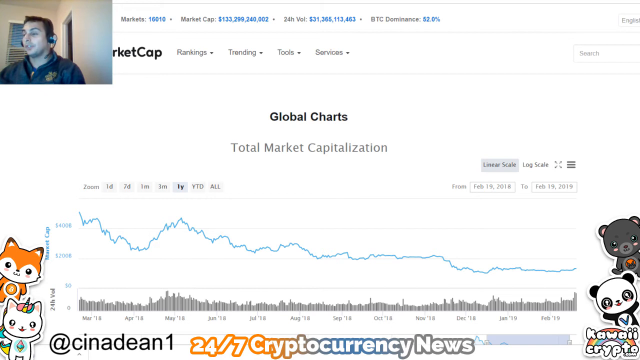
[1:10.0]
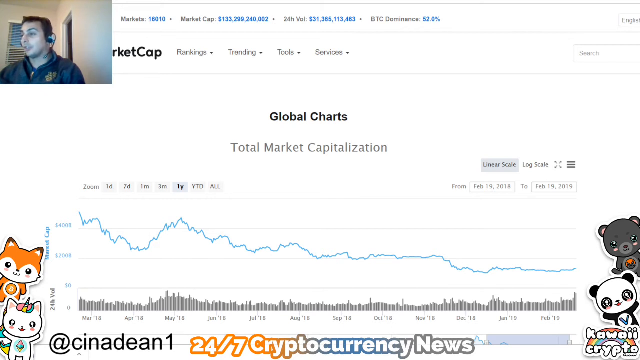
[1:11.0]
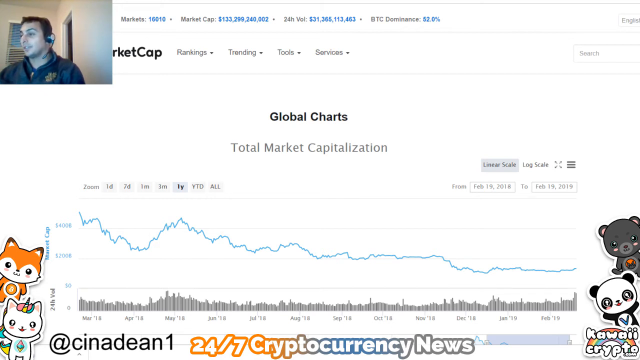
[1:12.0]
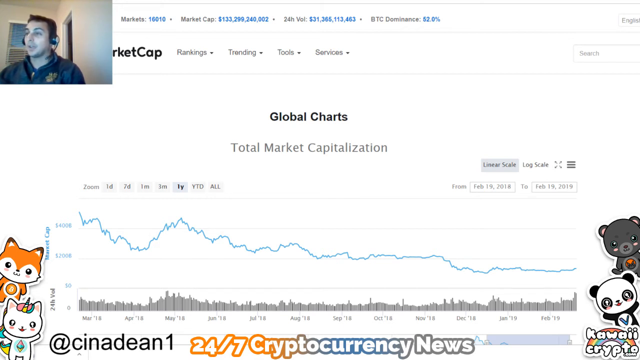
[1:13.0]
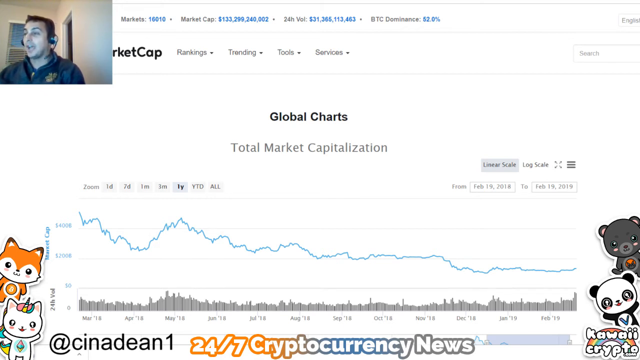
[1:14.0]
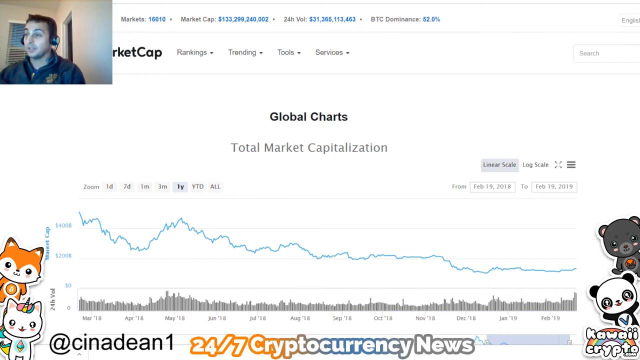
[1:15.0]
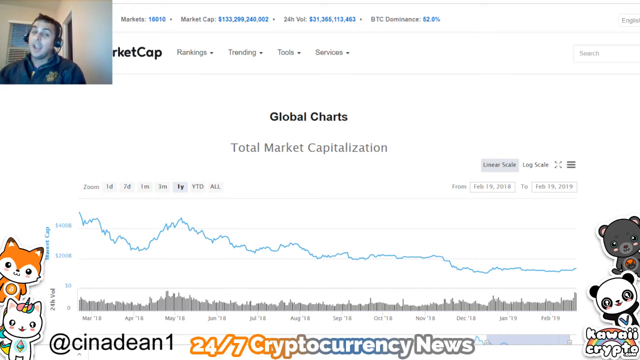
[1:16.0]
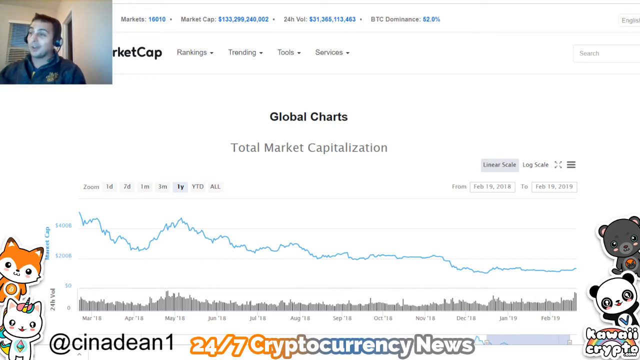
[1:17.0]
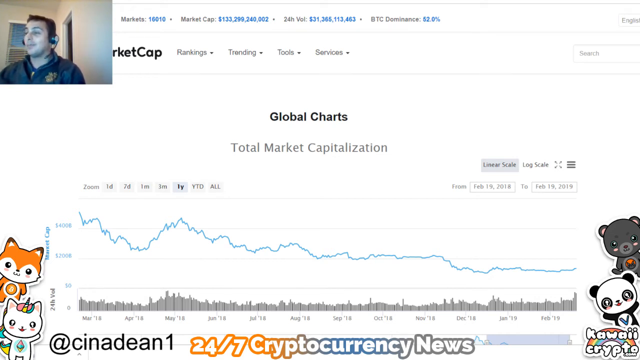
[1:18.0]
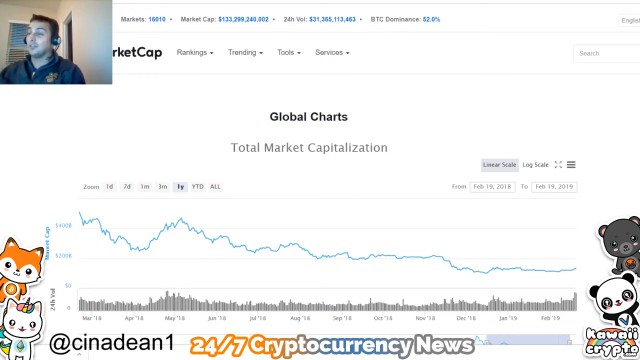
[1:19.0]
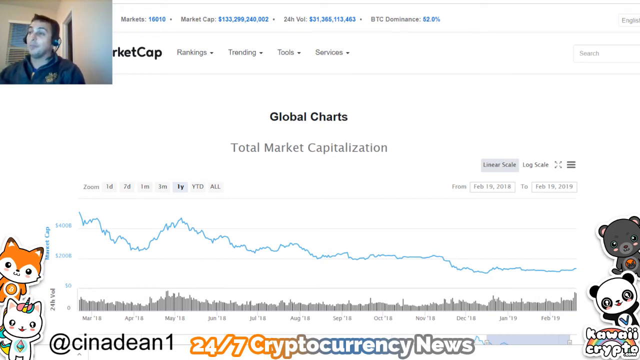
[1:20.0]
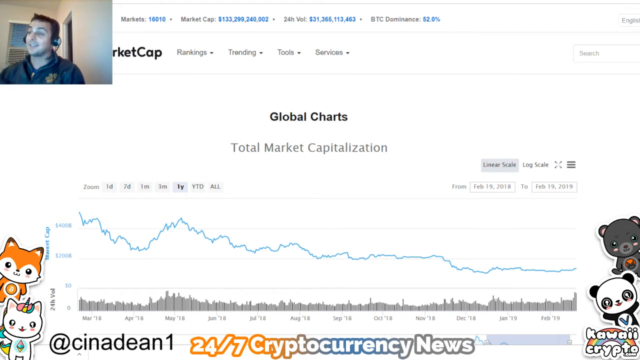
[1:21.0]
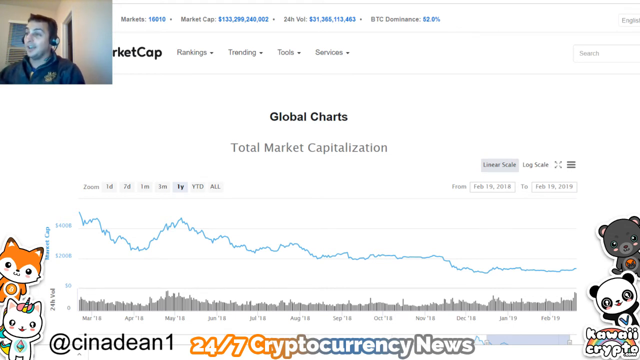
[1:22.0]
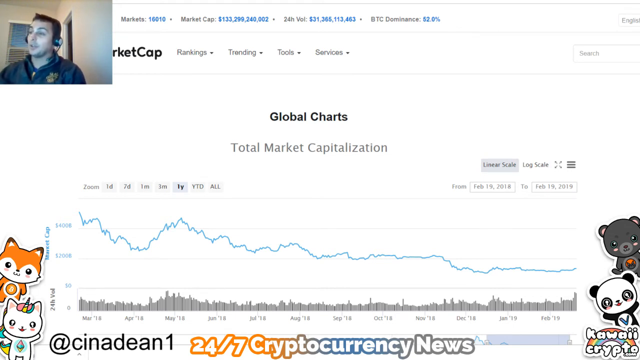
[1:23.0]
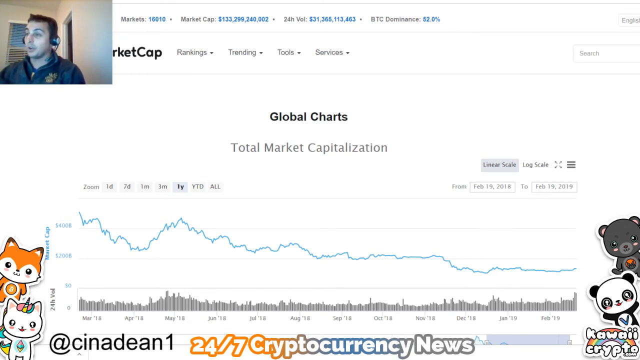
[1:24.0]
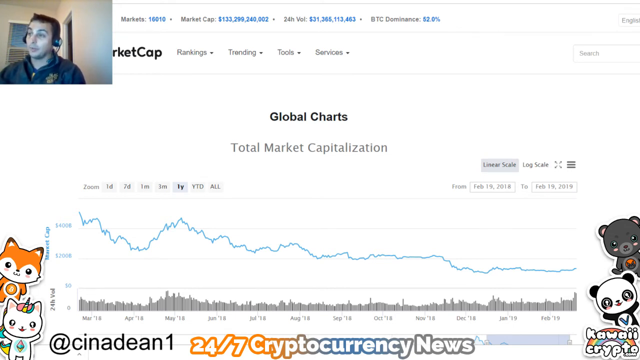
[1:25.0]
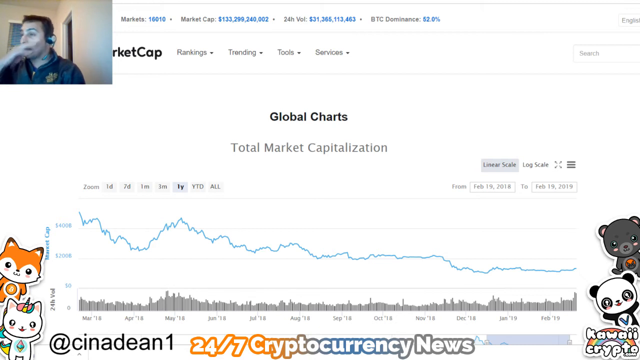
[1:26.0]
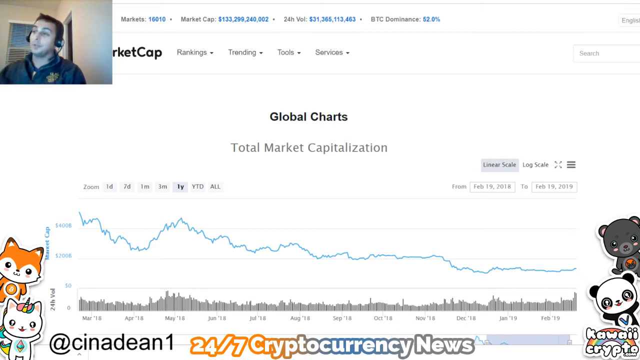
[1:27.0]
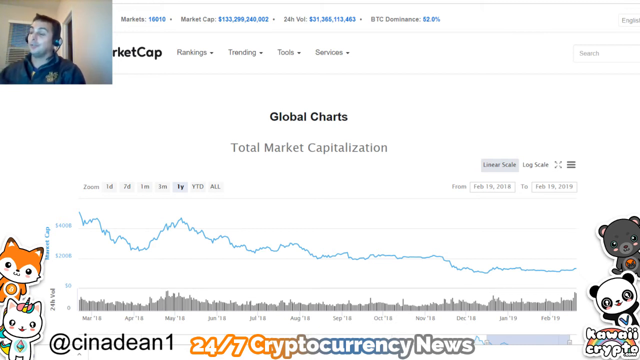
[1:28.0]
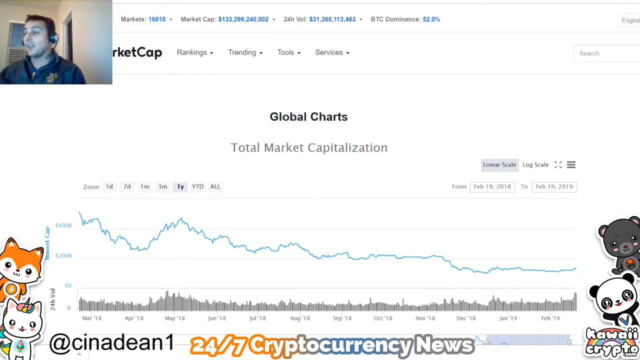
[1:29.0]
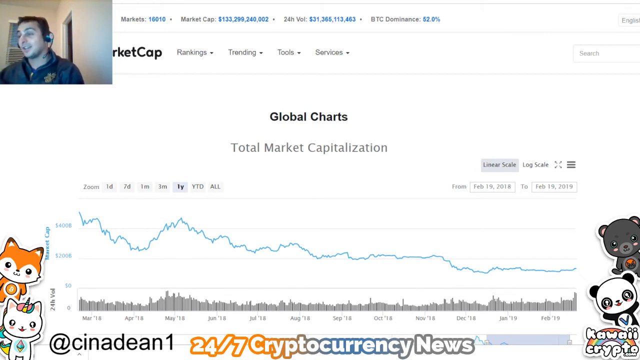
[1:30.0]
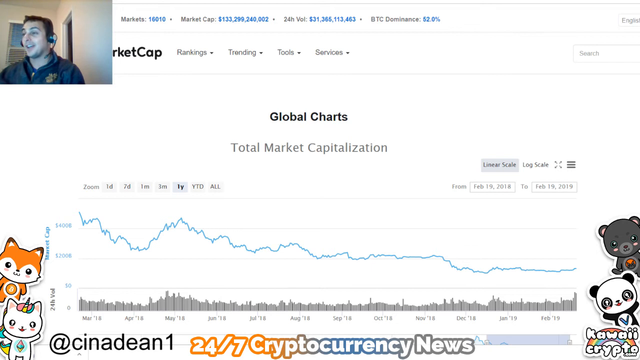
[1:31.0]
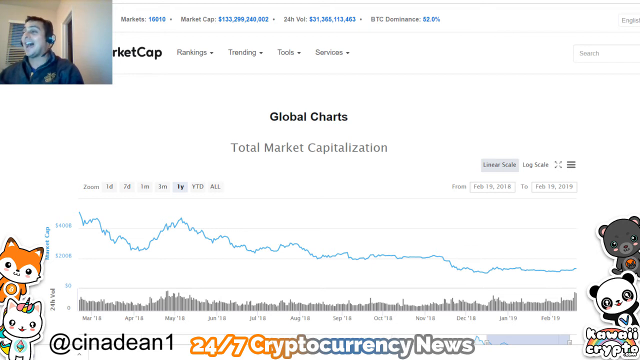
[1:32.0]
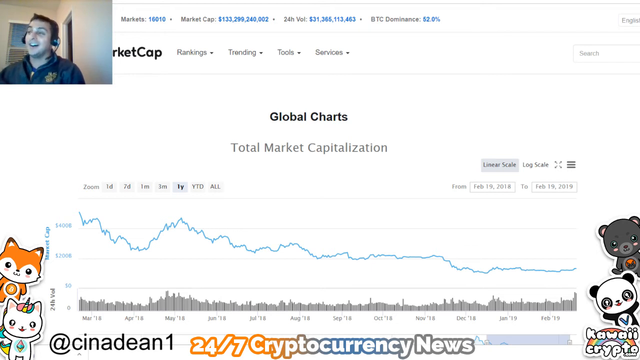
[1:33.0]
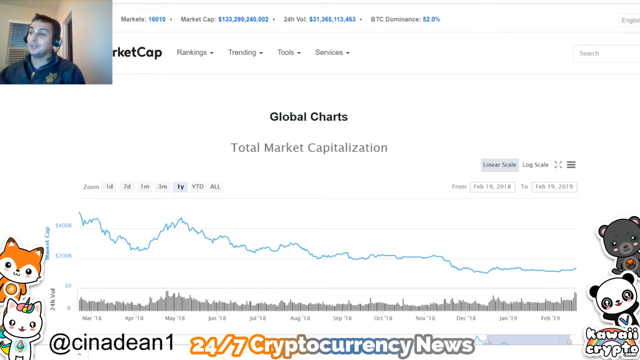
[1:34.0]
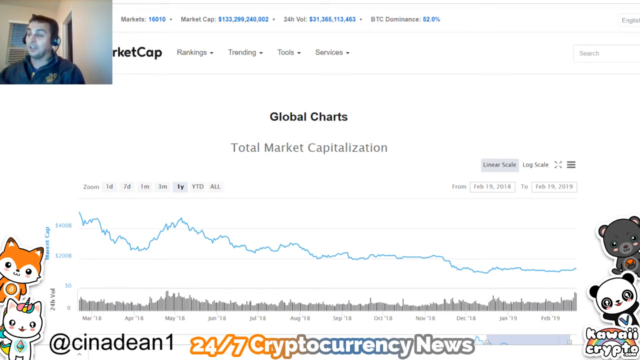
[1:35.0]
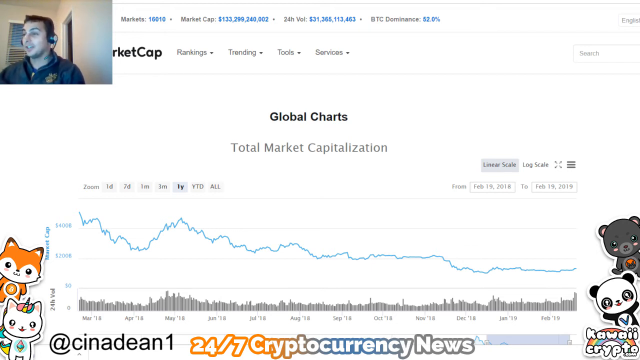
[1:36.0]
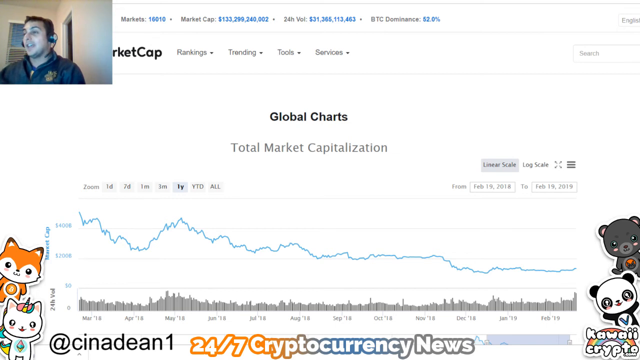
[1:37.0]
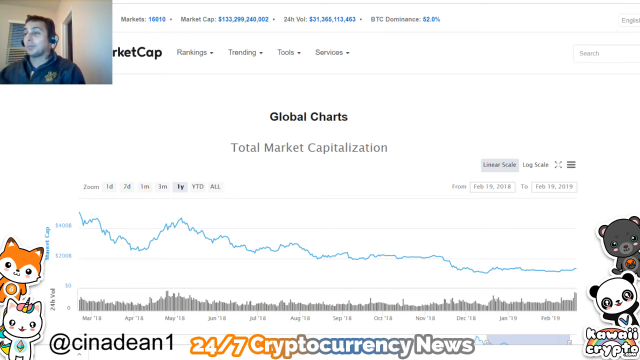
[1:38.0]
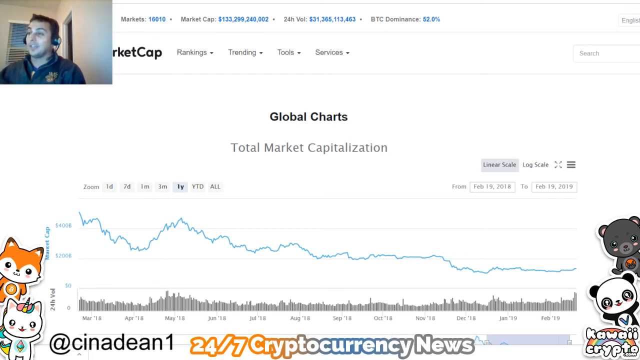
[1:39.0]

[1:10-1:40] The graph continues with the kawaii bears: a fox and a white unicorn on the left, a koala and a panda on the right. The text "Cinedine1" and "24x7 cryptocurrency news" is shown with the global charts total market capitalization graph, showing the evolution of the market cap over one year. At the top left is the webcam of the man hosting the video. The screen recording stays static while he talks, making hand gestures from time to time and small facial expressions, seeming quite happy.